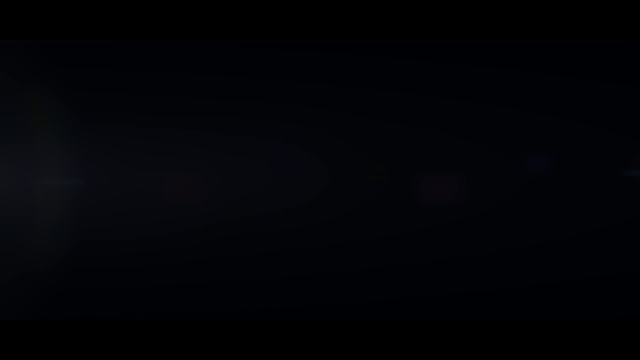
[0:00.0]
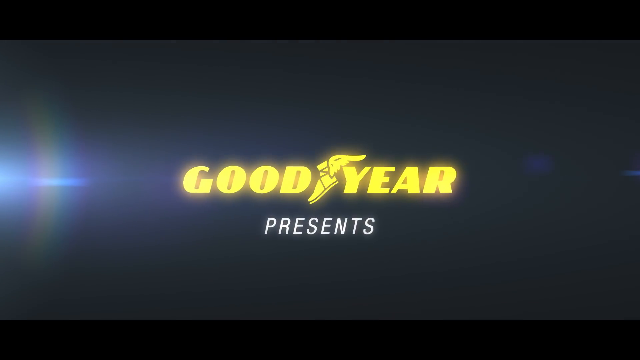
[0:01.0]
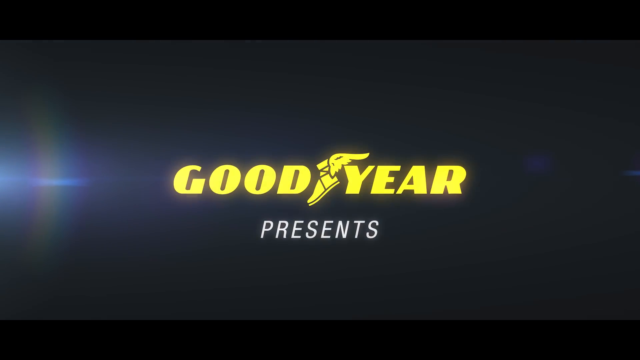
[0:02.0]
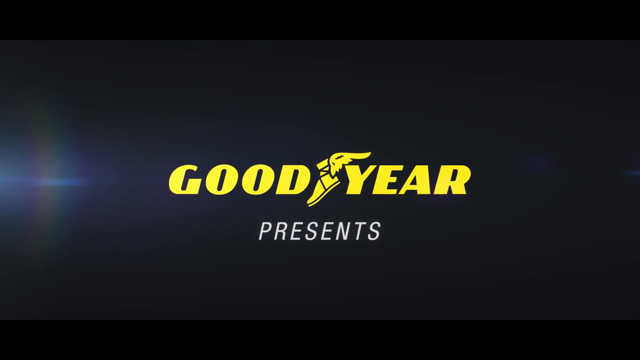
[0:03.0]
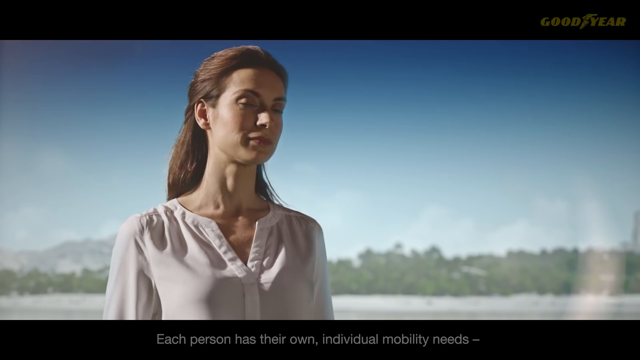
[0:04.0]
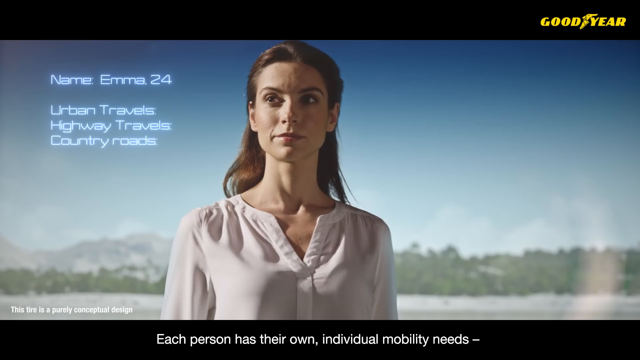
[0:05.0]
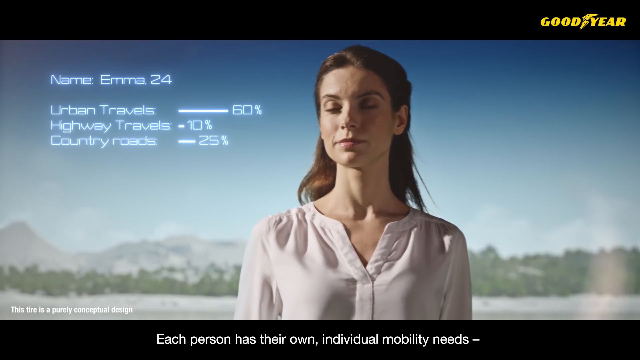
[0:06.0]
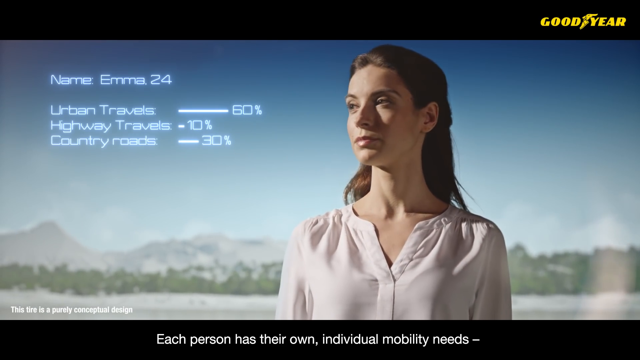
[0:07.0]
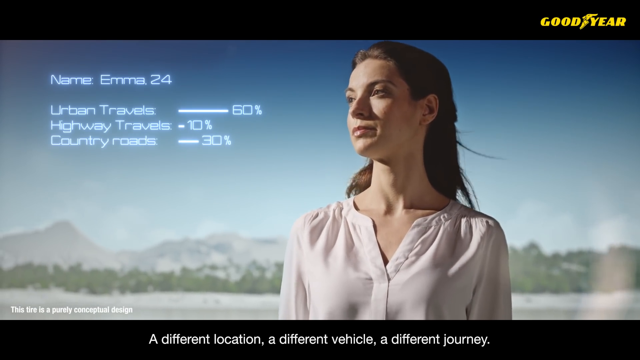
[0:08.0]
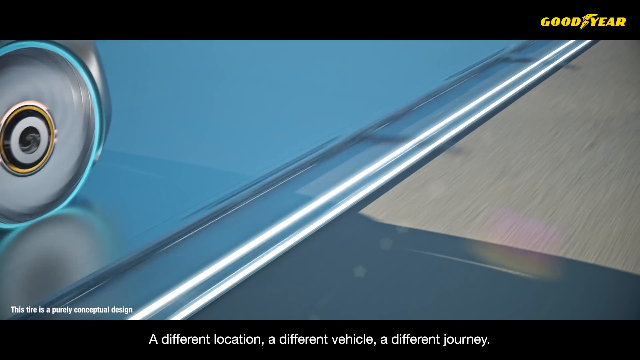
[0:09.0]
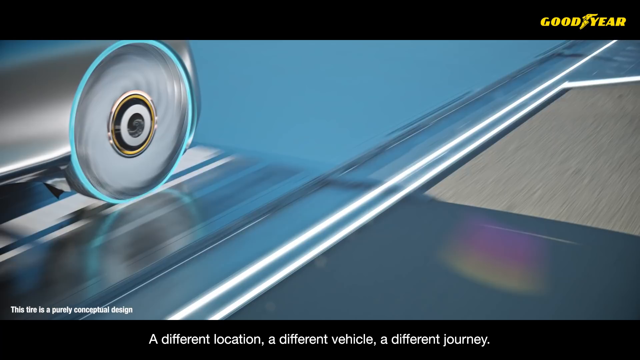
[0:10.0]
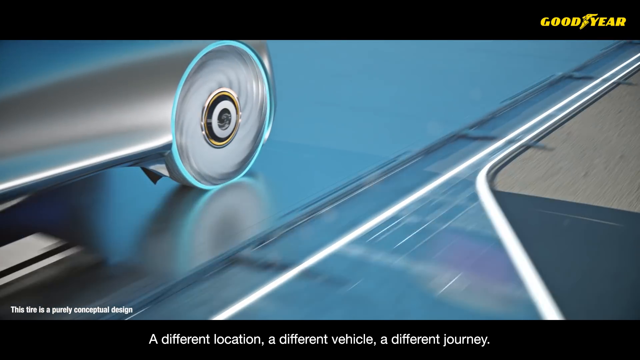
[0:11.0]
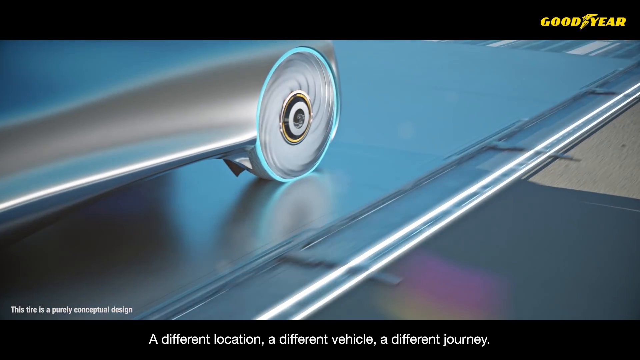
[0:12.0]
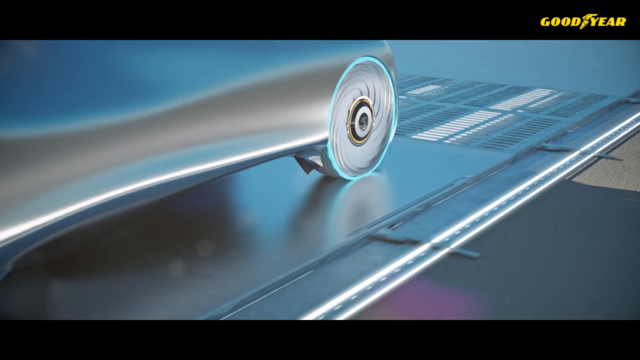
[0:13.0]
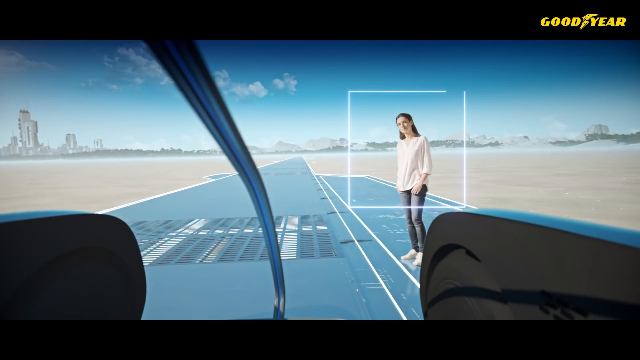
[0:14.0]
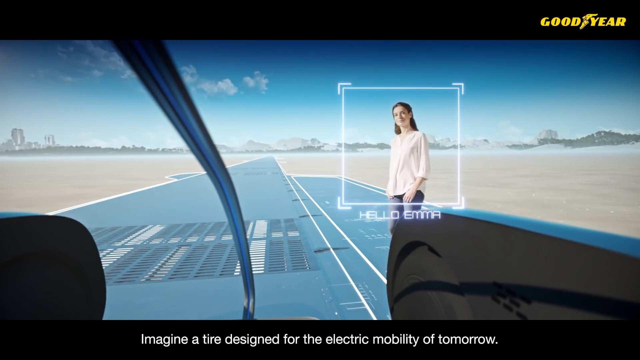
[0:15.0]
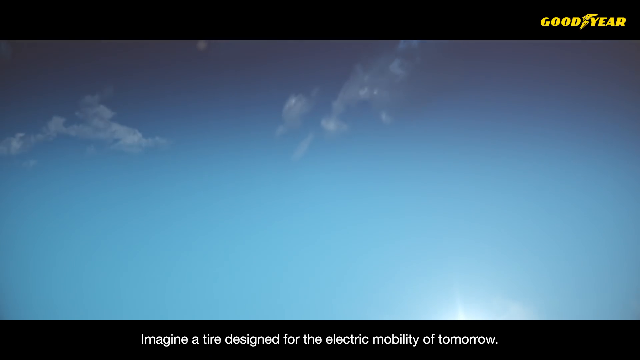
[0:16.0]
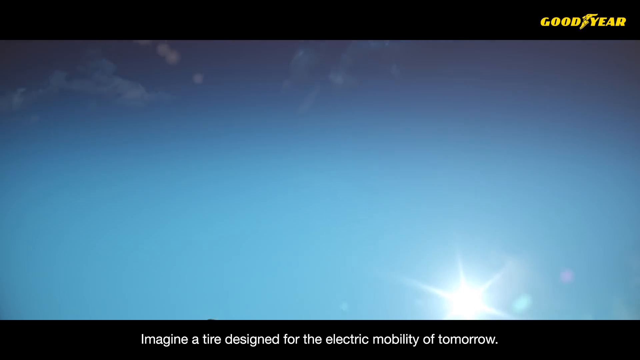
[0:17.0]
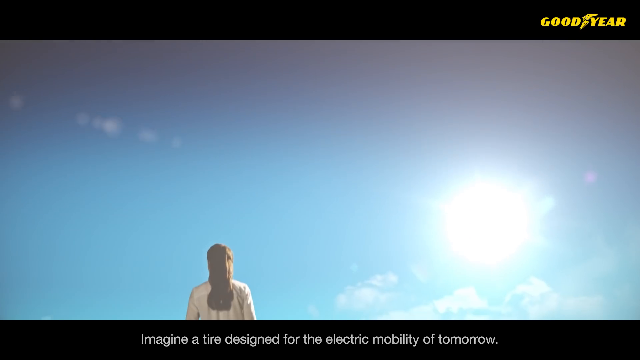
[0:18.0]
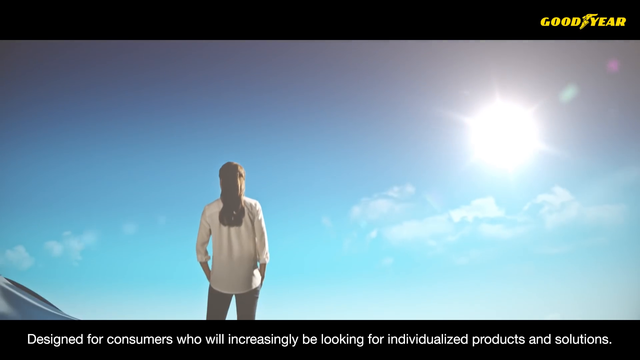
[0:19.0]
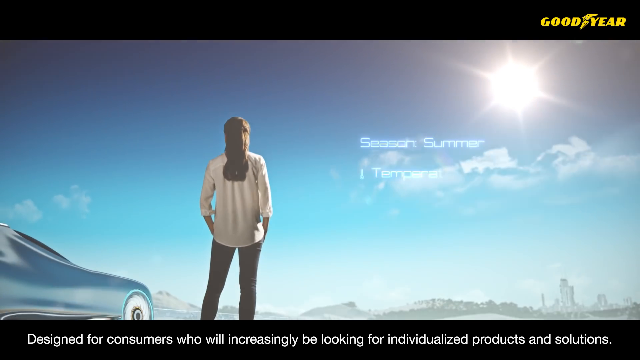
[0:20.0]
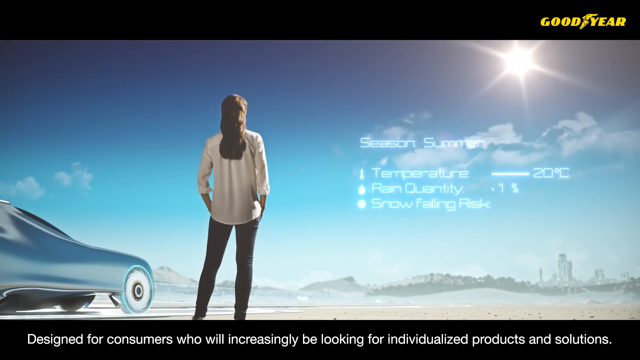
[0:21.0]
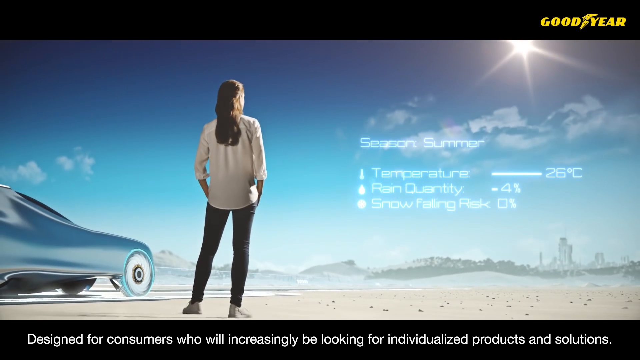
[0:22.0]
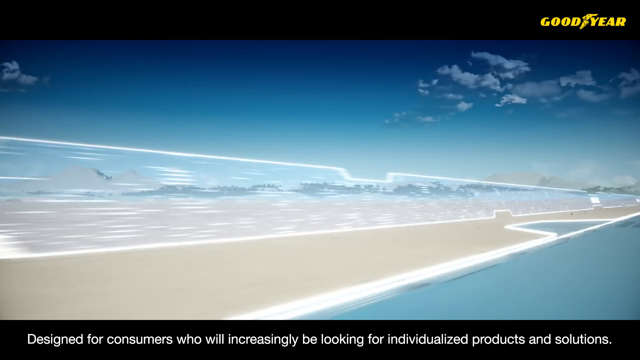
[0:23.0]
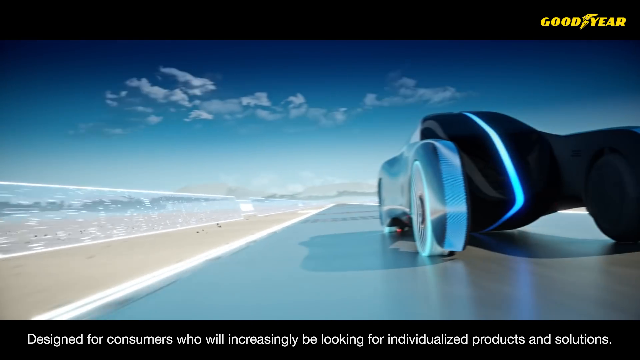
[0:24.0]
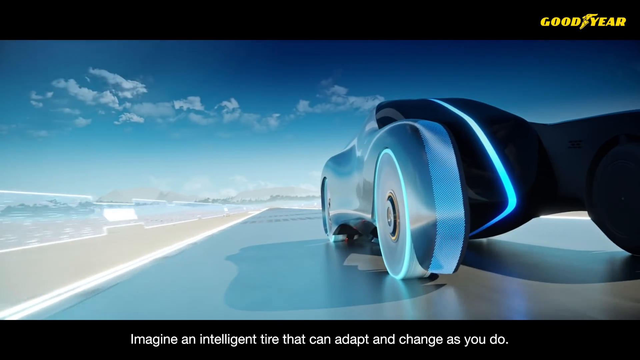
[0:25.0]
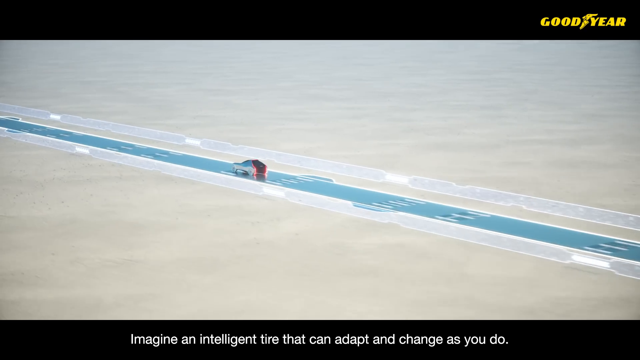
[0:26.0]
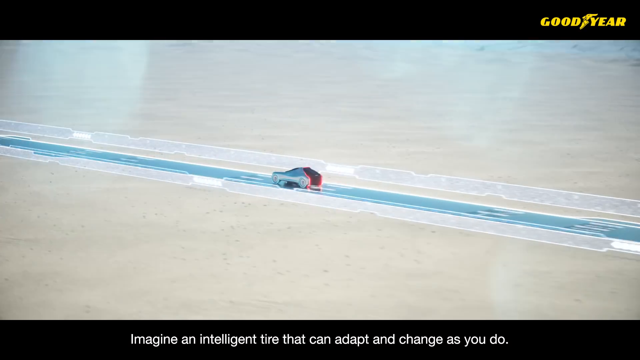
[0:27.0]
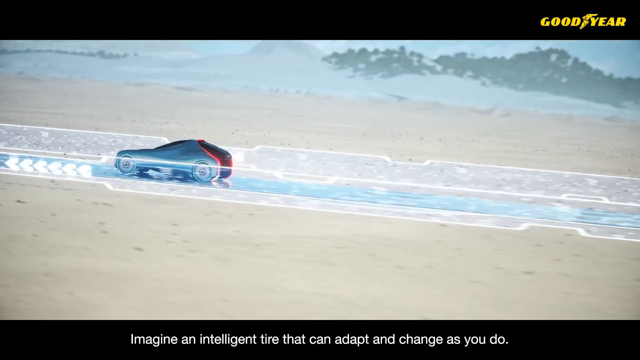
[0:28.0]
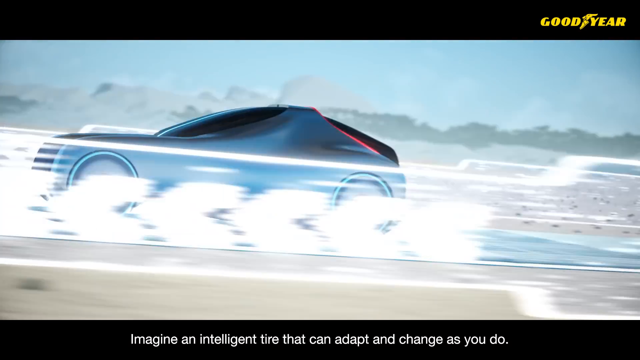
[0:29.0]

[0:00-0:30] This Goodyear Tires video features only one person, a woman with brown hair, a white top and jeans, who is standing. The setting is outdoors: she stands on an open road with wide open spaces all around. At times the landscape looks like a desert or a beach with mountains in the background, and nothing else clutters the scene. The tire being advertised appears to be meant for electric cars or something futuristic. It is shown on a silver car, and stats keep appearing on the screen in a futuristic style. At first the stats are about the woman, giving her name as Emma along with other details; later they change to stats about the tire, moving too quickly to read fully. The car seems to greet her with "Hello Emma." Among the on-screen words are "summer" and "snow", suggesting the tires are apparently meant to be all-terrain.